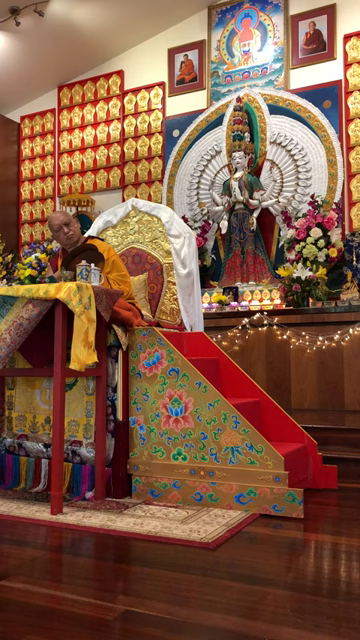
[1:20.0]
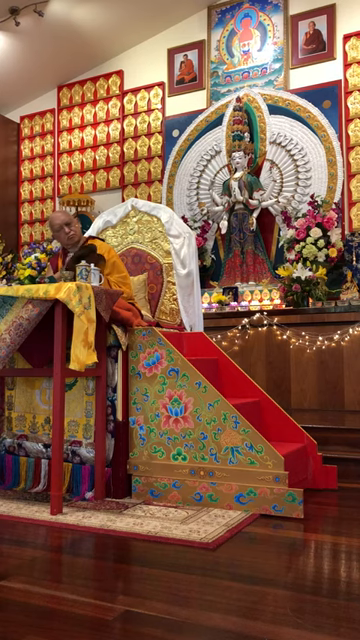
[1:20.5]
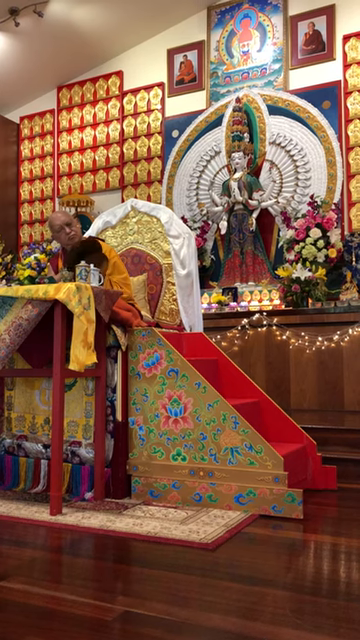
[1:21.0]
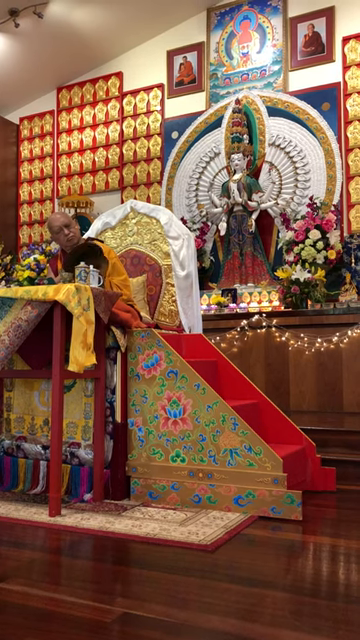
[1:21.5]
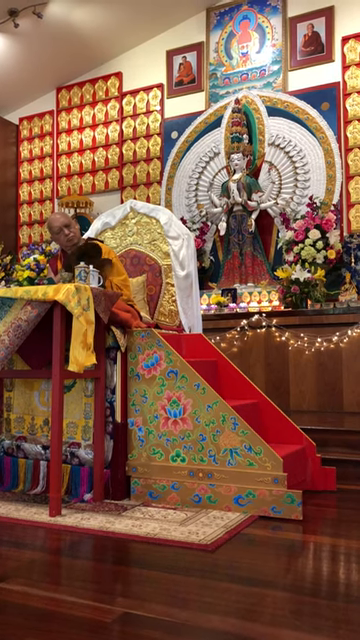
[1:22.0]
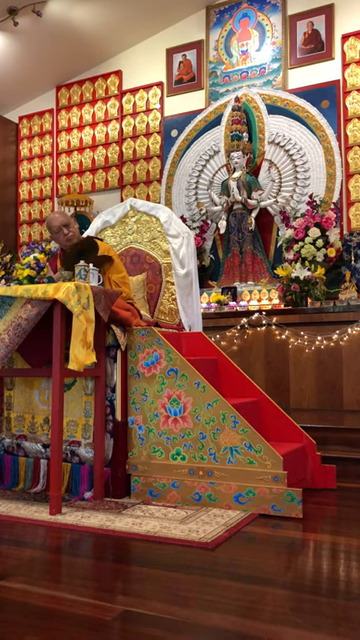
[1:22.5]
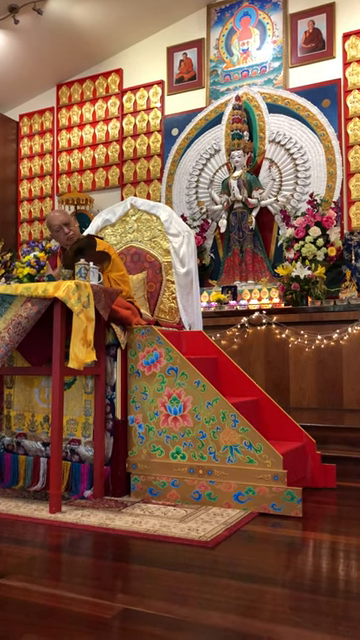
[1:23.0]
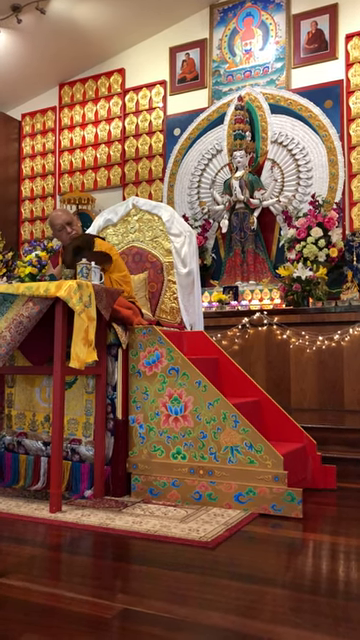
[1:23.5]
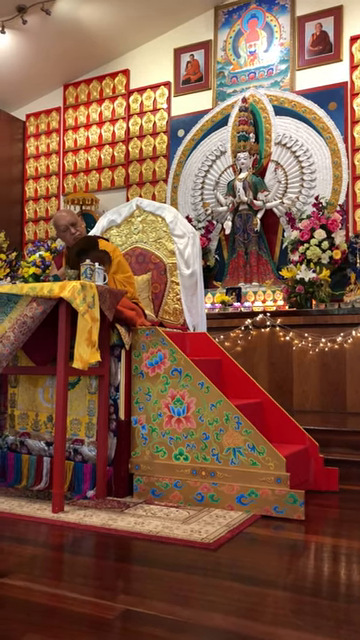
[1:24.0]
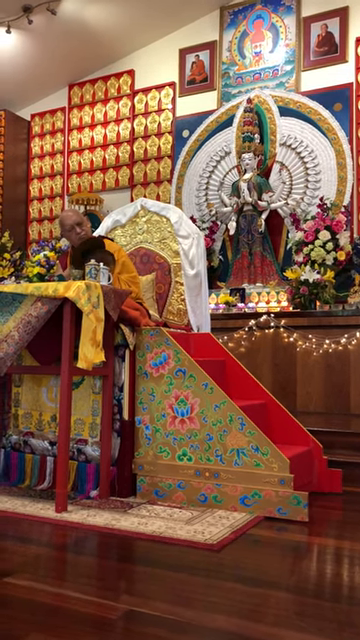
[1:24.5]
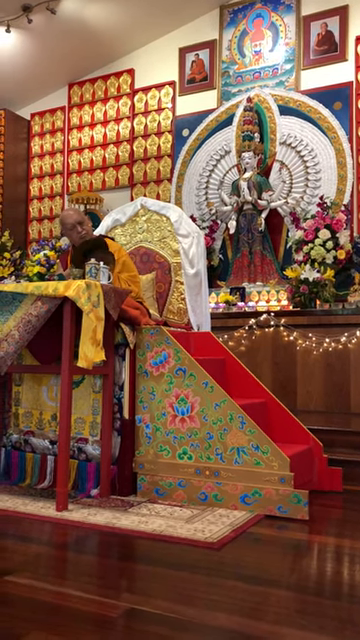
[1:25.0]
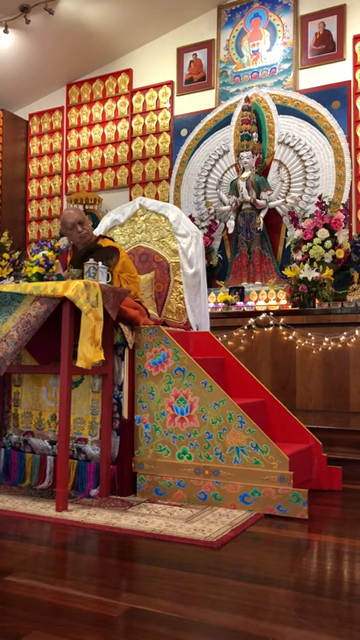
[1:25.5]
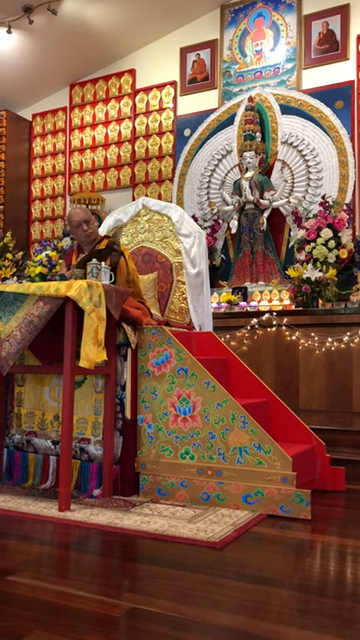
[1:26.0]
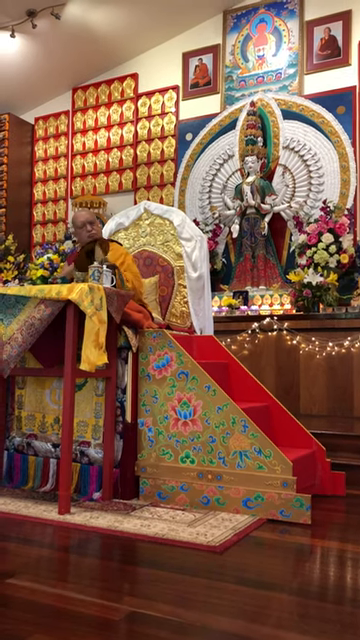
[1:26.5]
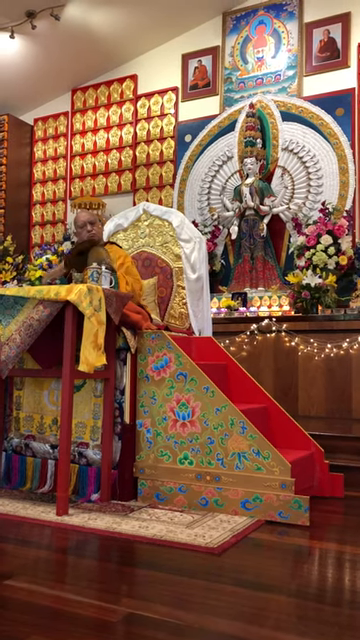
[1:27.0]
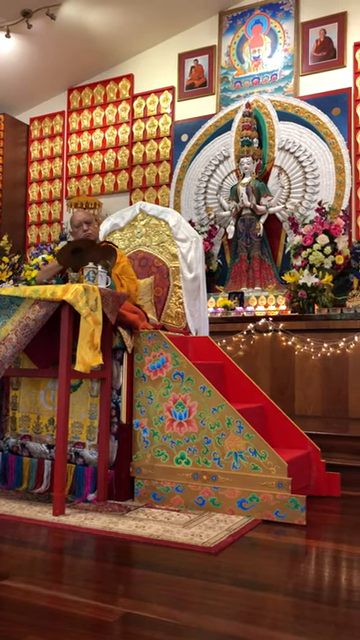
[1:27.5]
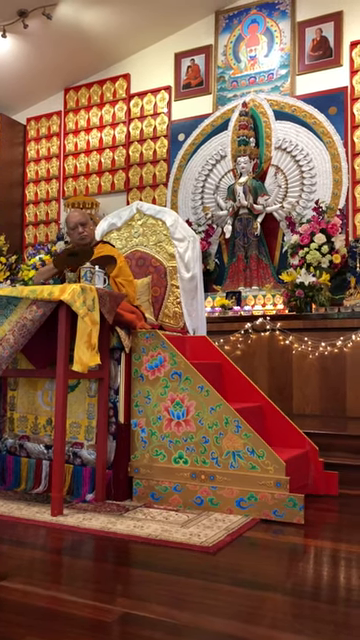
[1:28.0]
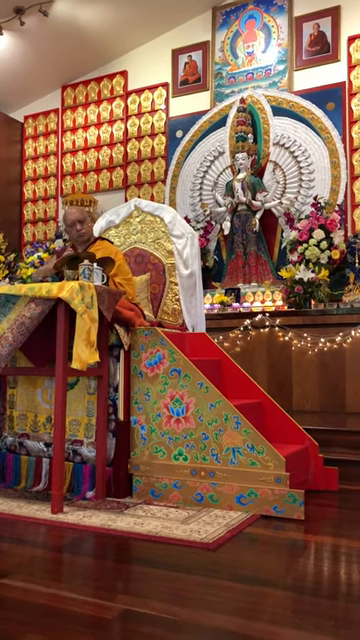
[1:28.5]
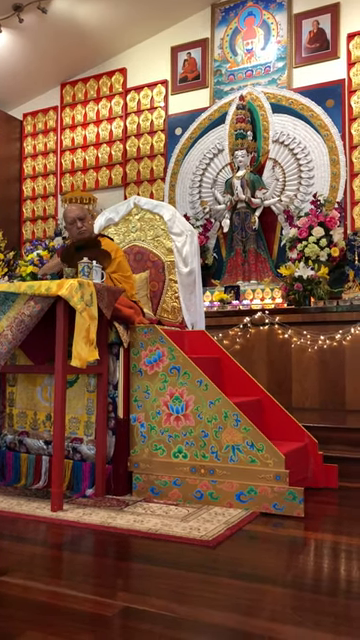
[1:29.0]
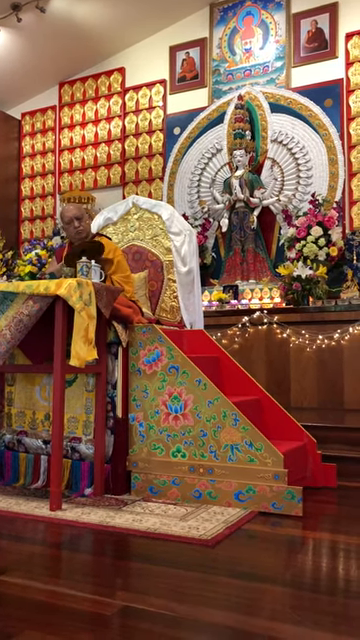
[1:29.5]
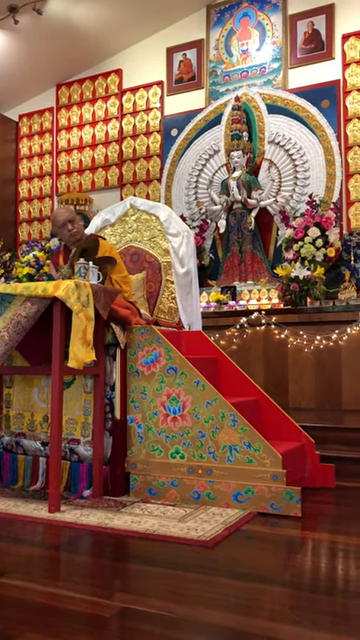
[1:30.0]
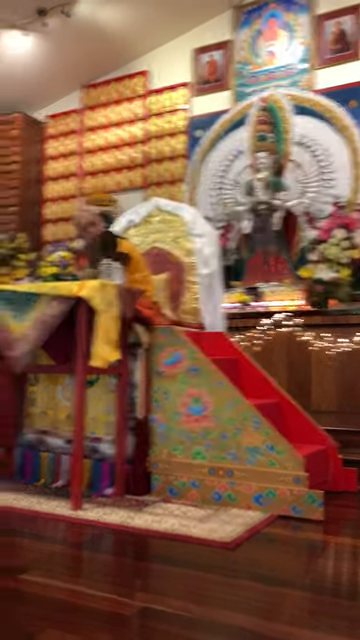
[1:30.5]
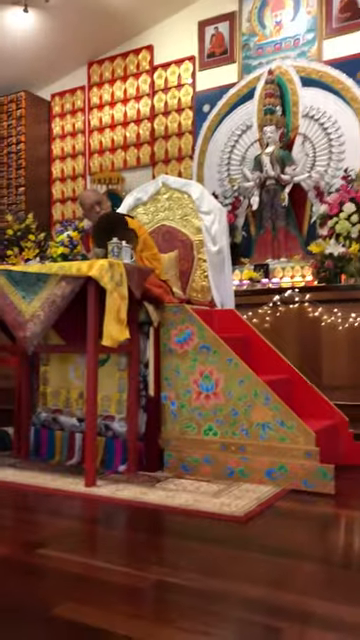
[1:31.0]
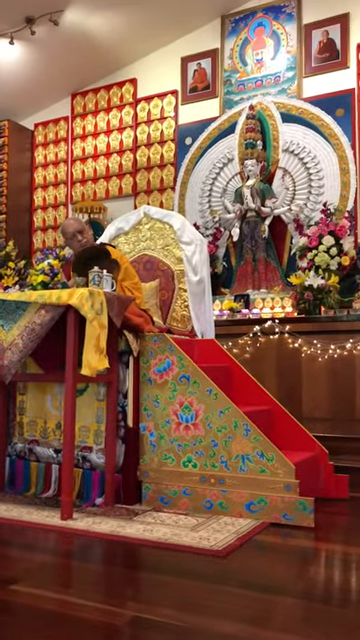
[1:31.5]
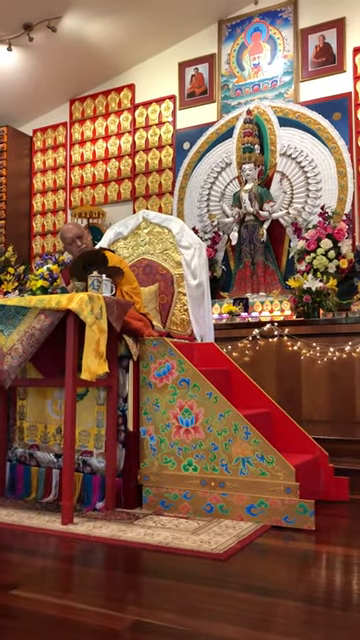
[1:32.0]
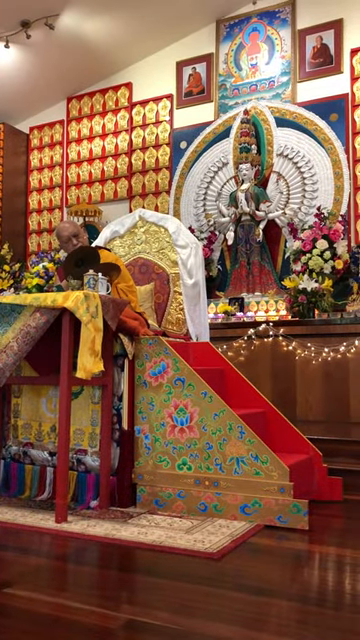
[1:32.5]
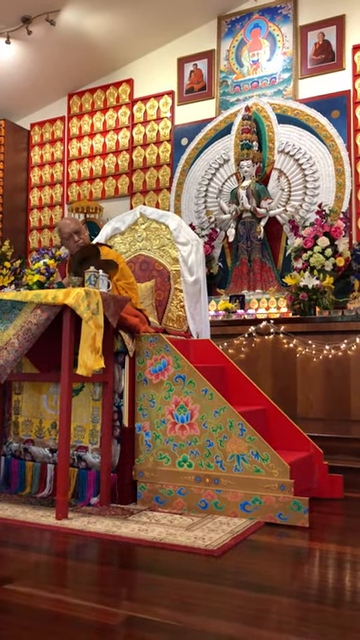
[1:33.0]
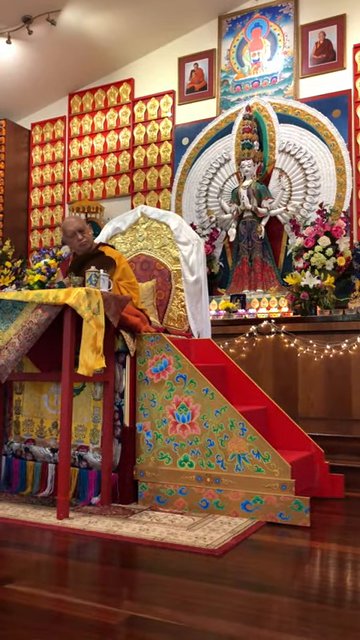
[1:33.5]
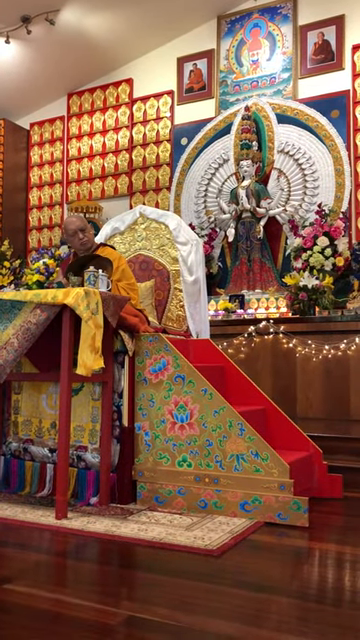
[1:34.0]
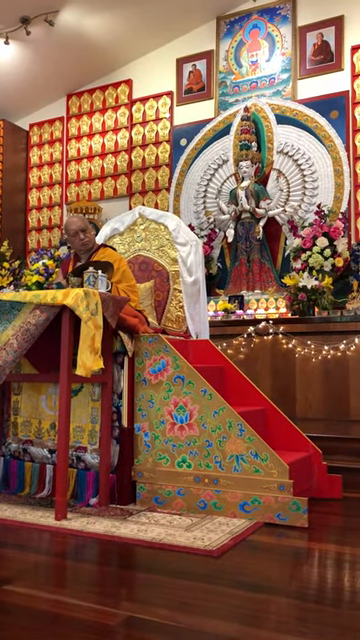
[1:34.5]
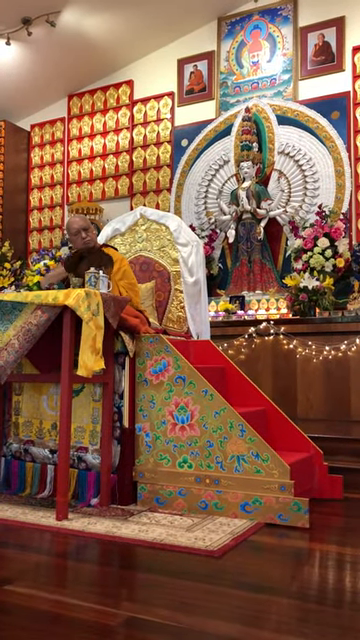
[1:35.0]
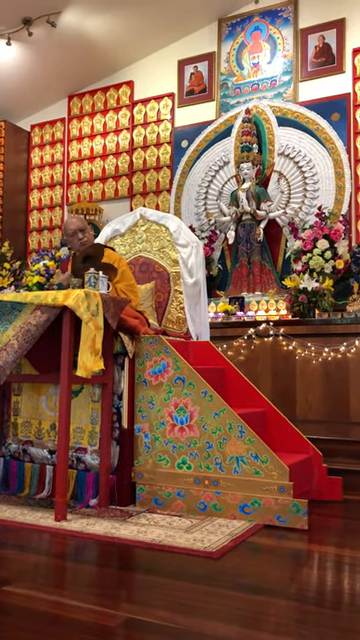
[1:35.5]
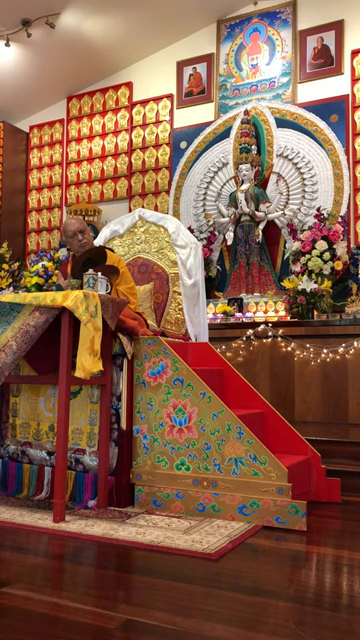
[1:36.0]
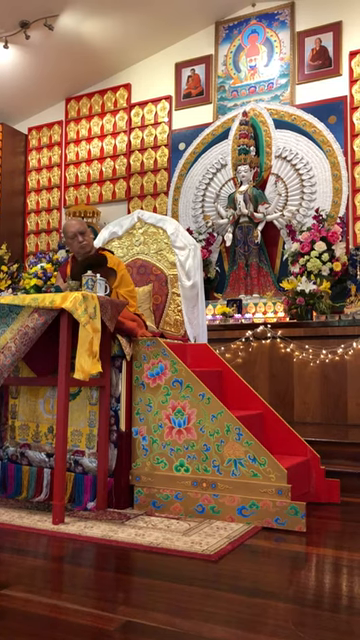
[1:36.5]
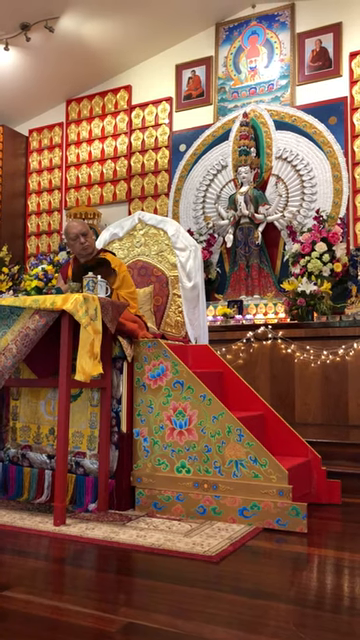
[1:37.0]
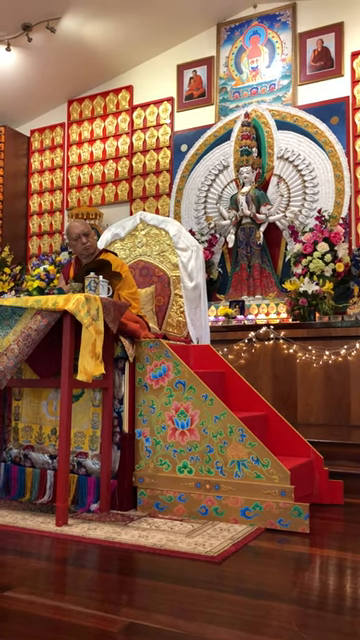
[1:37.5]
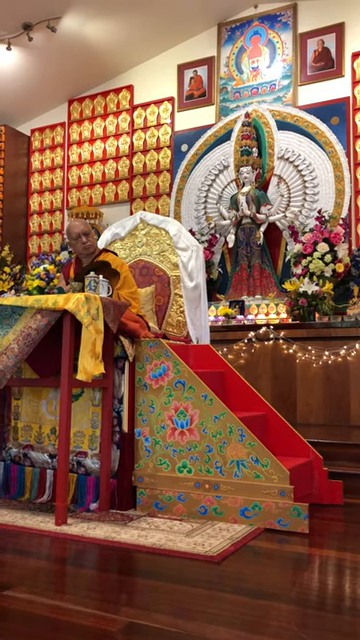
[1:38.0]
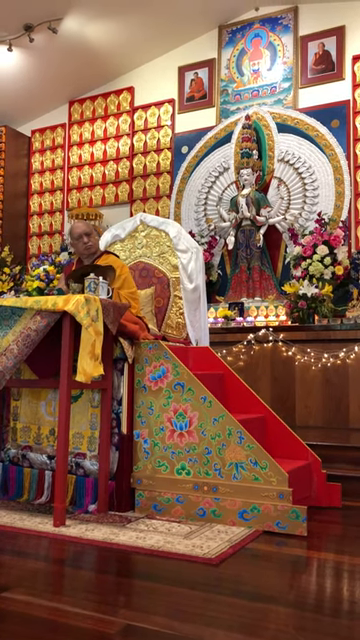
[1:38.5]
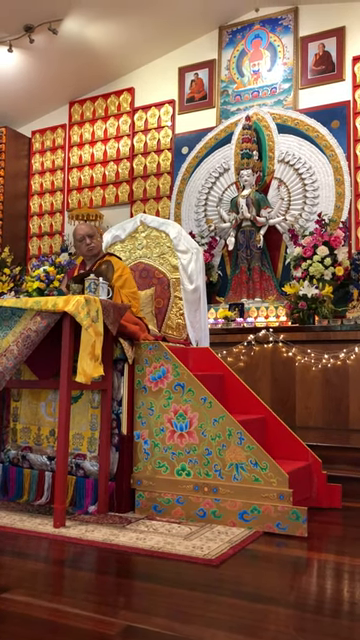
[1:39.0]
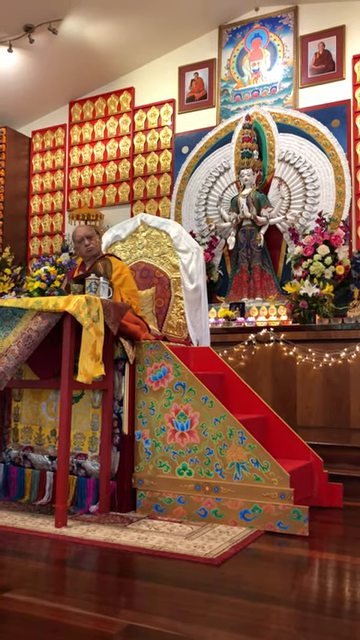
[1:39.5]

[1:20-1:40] A Buddhist monk is within a Buddhist temple. The back wall is adorned with various religious Buddhist photographs and emblems, and behind him is kind of a sculpture with a colourful headdress. On a kind of altar behind him are flower arrangements and lit candles in small glass cups, along with dangling fairy lights. The monk is sat on a very high golden throne with a tall table in front of him covered in silk scarves. A little set of three ornate steps, bright orange and covered in a kind of lotus flower depiction, lets him get up onto the throne. He holds two hand cymbals and gently taps them together, moving his whole body with the movement; he sways, and the cymbals sway.